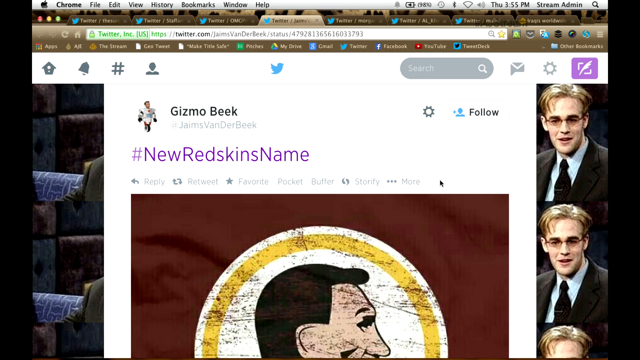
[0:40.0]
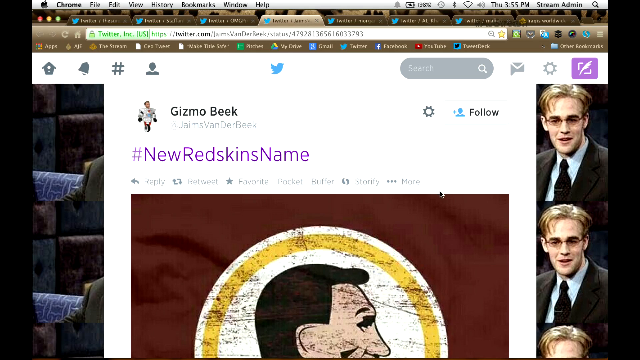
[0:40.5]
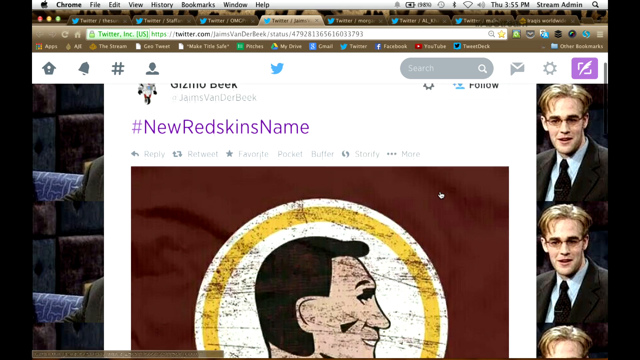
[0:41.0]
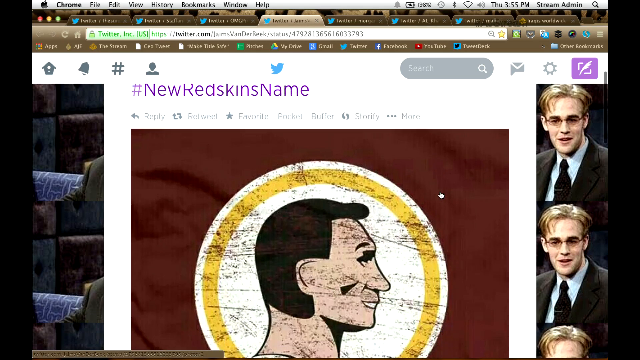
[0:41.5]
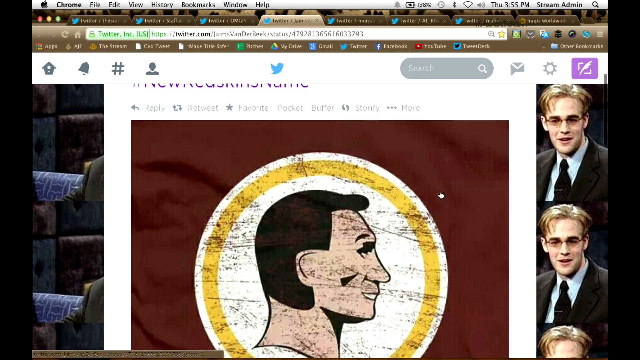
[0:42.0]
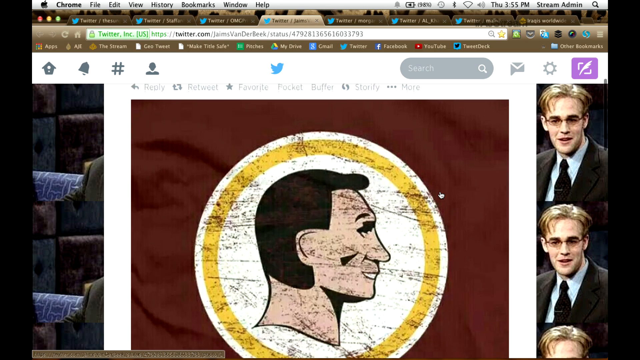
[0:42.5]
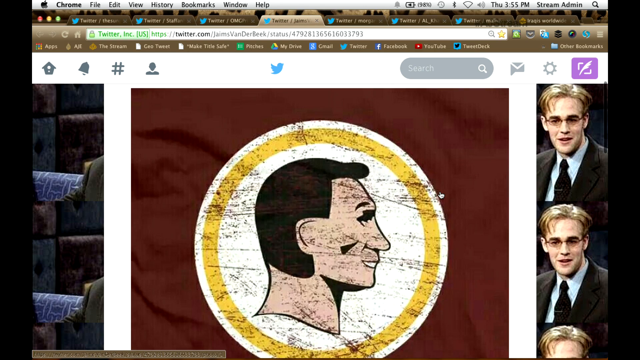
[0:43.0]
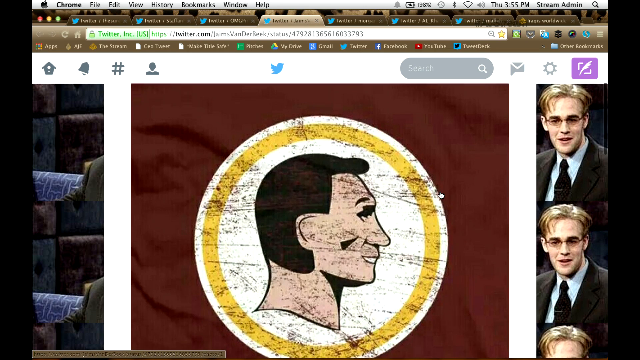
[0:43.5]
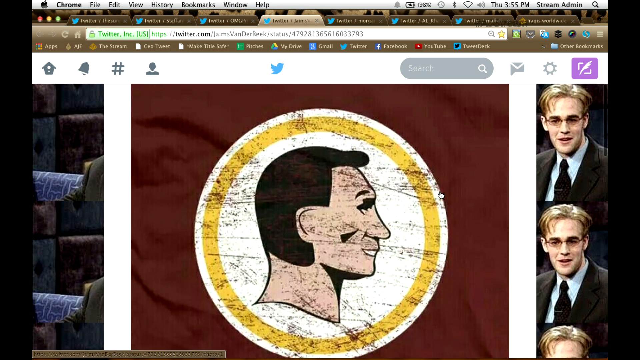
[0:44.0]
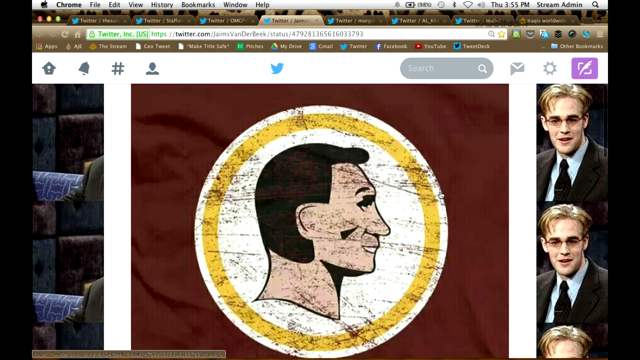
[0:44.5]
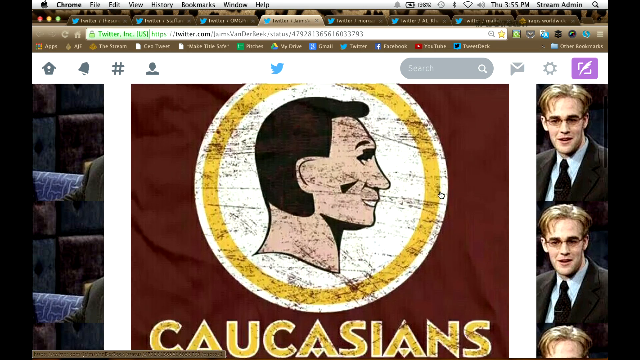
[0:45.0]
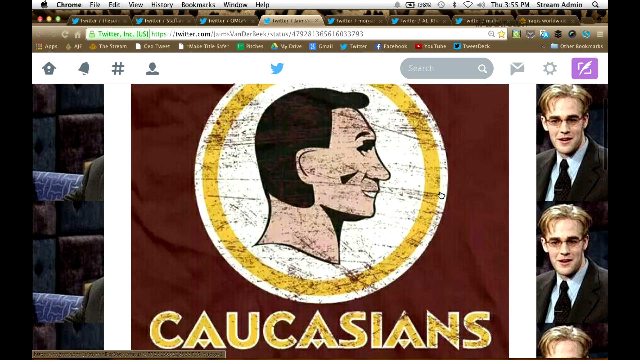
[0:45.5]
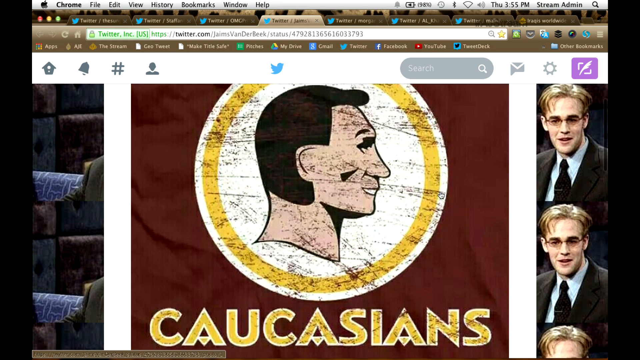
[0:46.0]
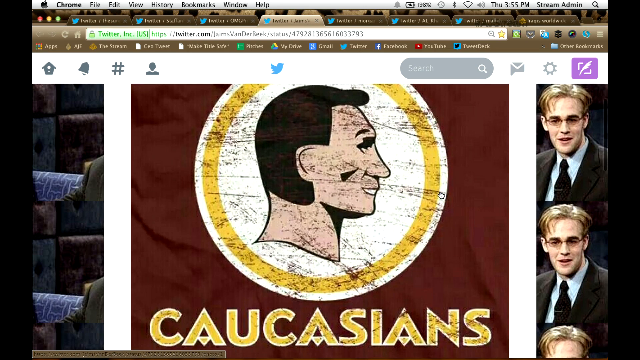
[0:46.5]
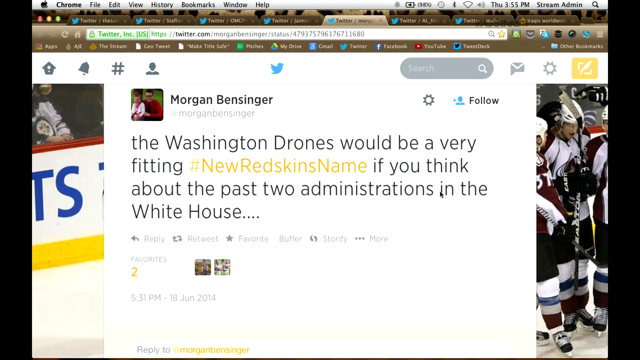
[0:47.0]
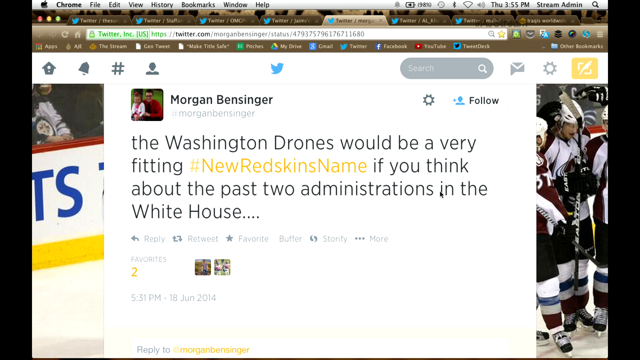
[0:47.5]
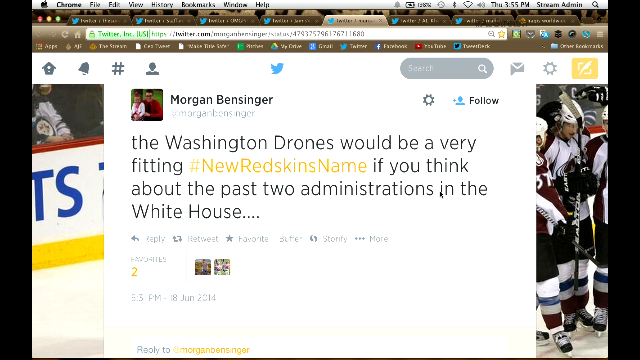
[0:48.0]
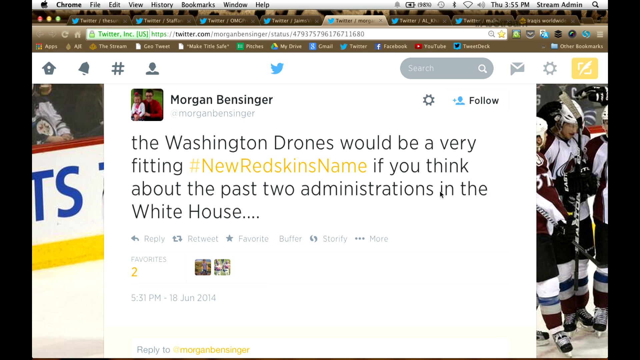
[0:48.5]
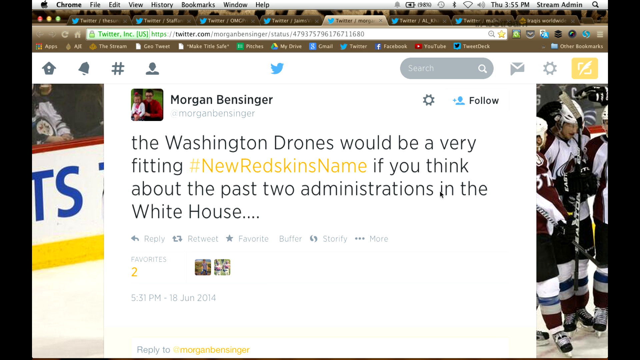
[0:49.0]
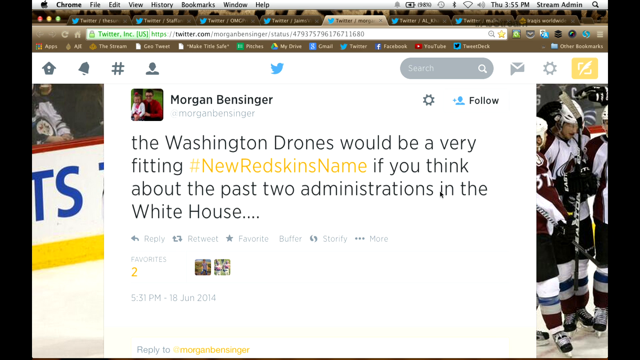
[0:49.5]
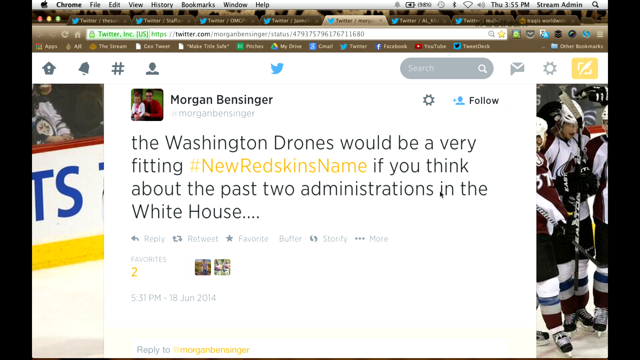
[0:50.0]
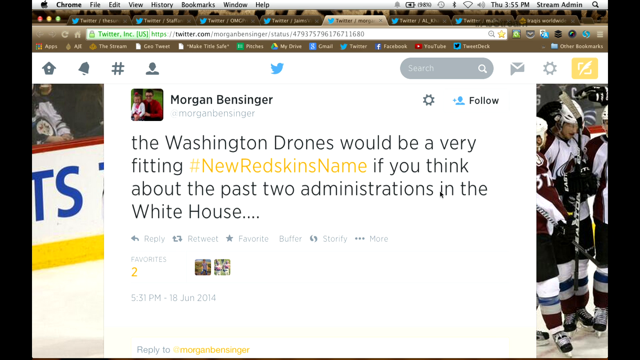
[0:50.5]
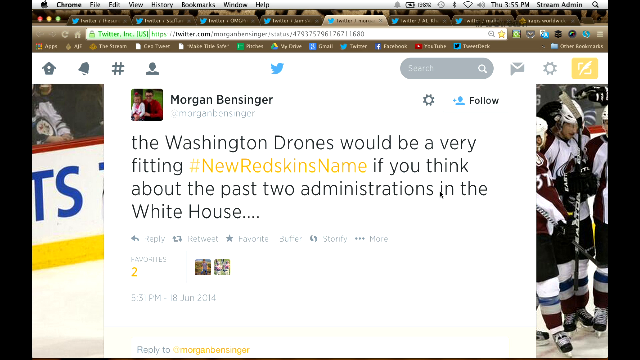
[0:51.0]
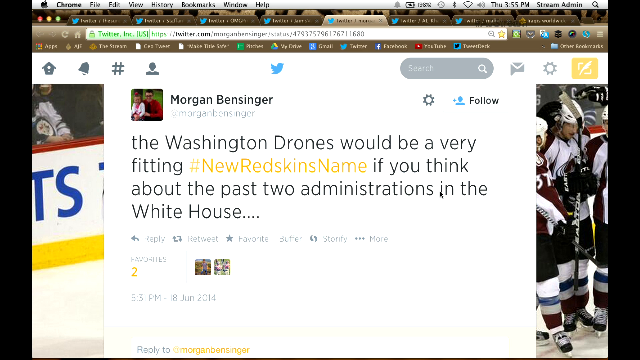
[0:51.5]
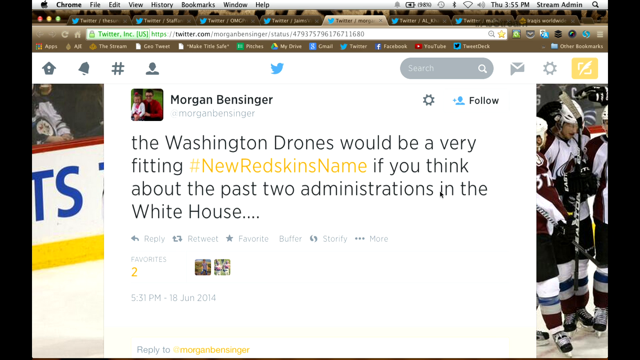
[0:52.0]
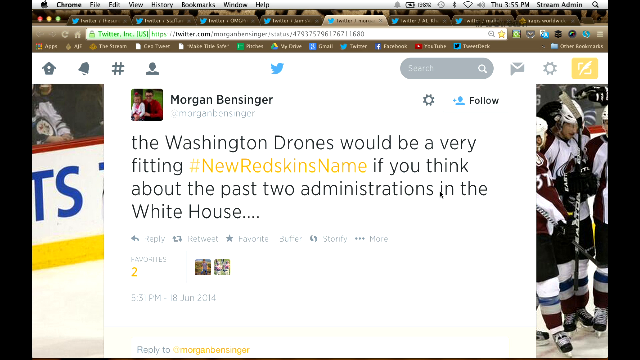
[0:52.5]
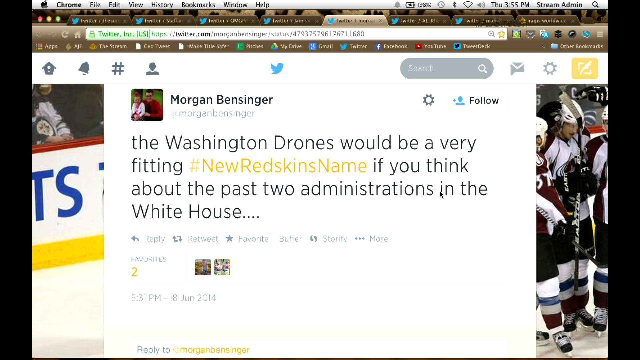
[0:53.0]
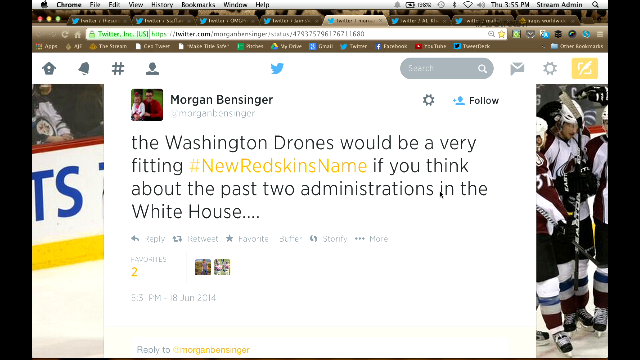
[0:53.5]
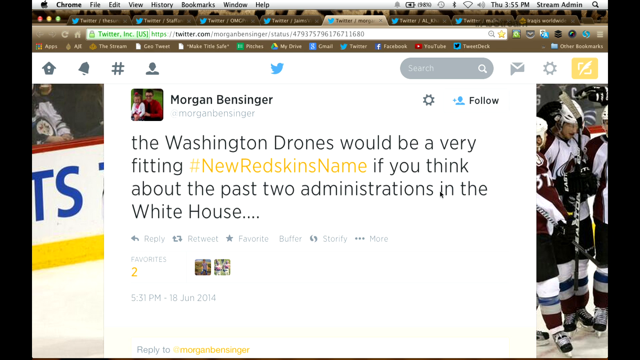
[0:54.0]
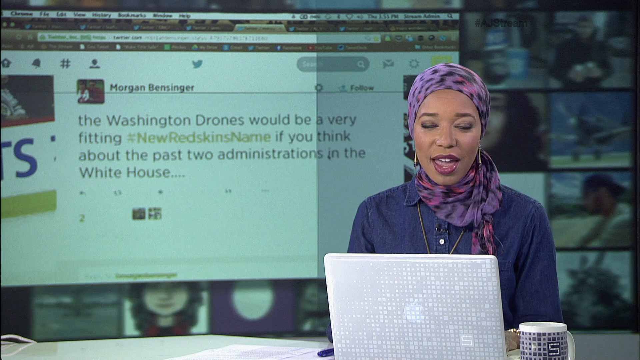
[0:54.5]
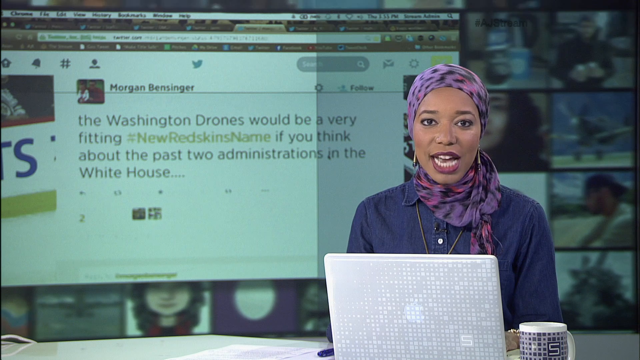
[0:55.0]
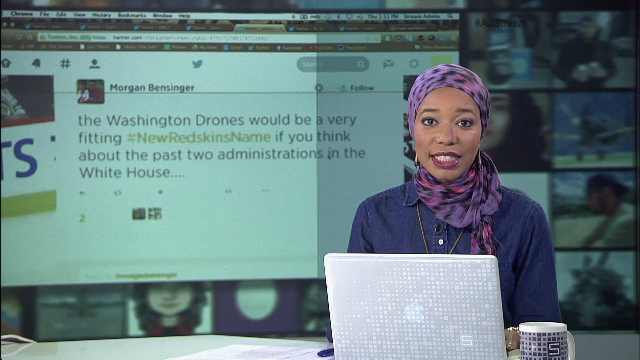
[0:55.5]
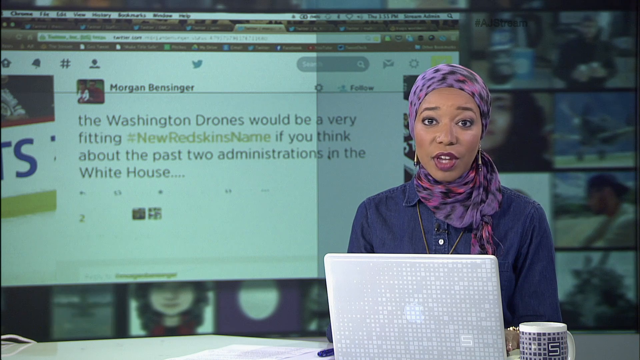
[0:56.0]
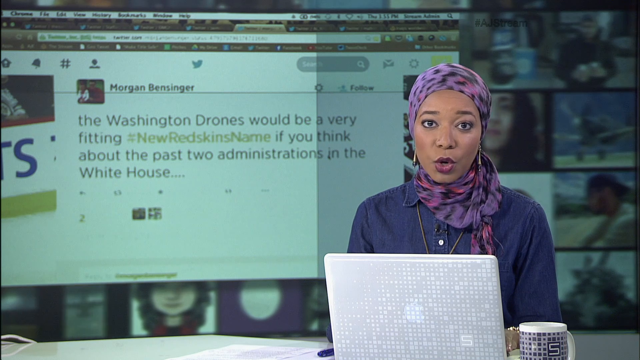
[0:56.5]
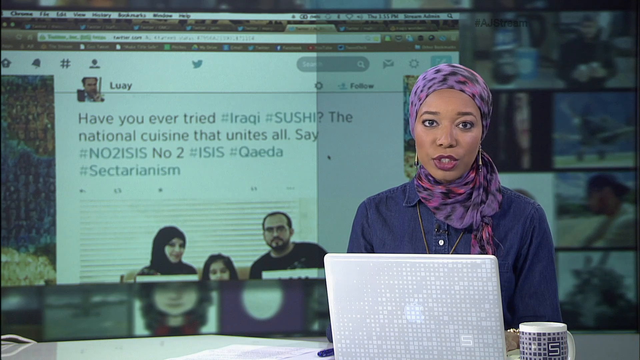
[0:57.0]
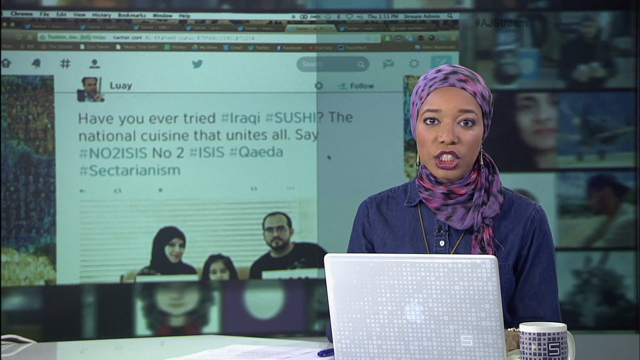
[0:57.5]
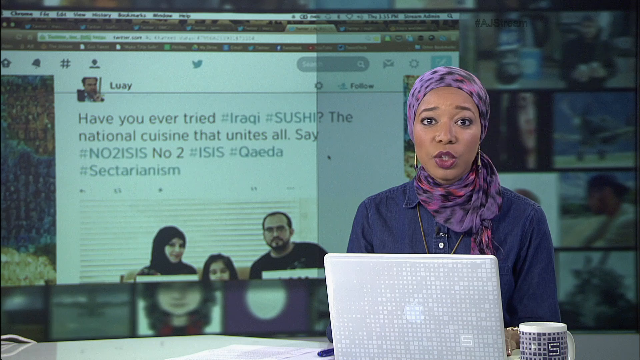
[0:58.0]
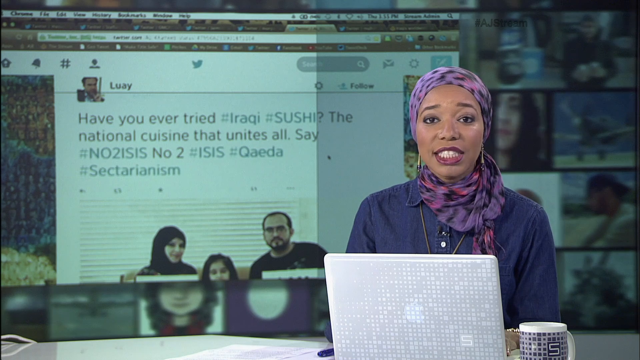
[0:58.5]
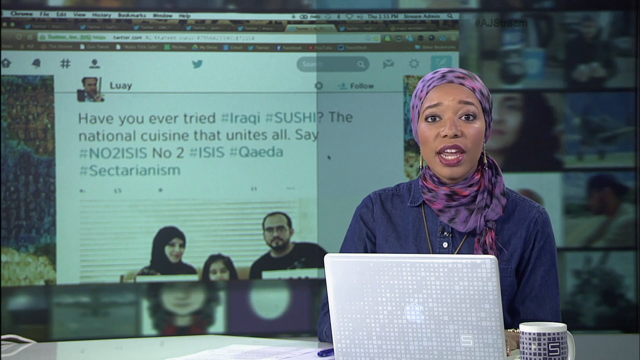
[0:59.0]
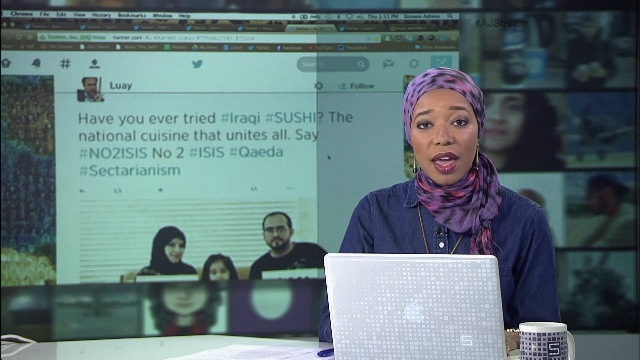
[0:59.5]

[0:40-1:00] An image shows an open tab that says "Twitter" at the top, "twitter.com". It says "Gizmo Beak, James Van Der Beek" and "# New Redskins Name", and shows an image of the old Redskins baseball logo: a white circle with a yellow ring around it and a baseball player in the center. Underneath it says "Caucasians". A post from Morgan Bensinger includes the text "the Washington drone" and "if you think about the past two administrations in the White House". The news reporter then comes back on the screen with her purple bandana and her laptop open, with a few more blurry images behind her. The screen changes one last time.